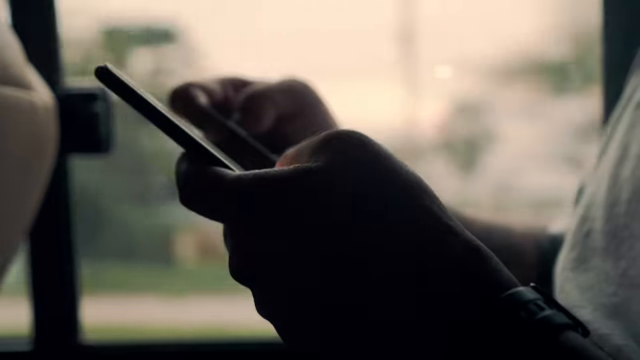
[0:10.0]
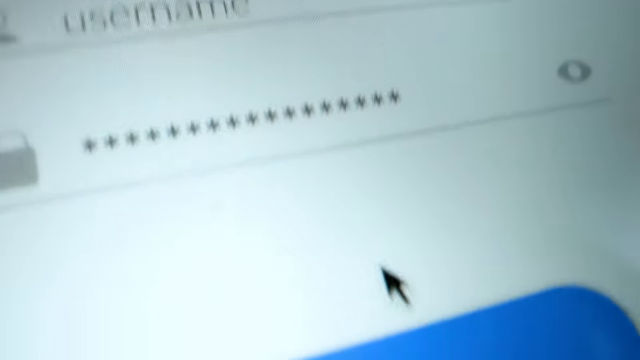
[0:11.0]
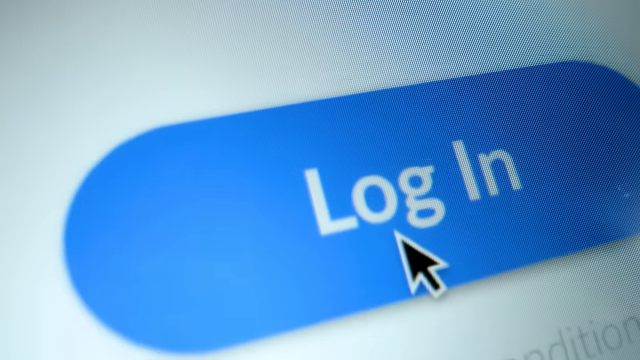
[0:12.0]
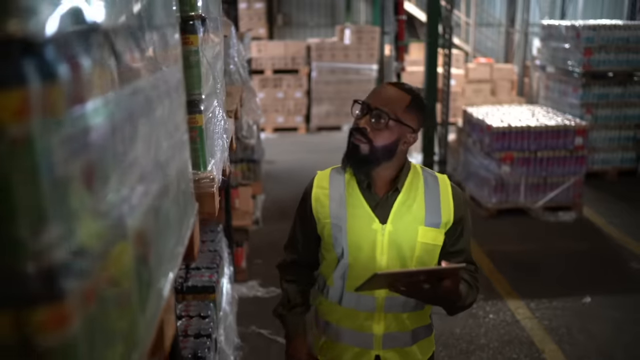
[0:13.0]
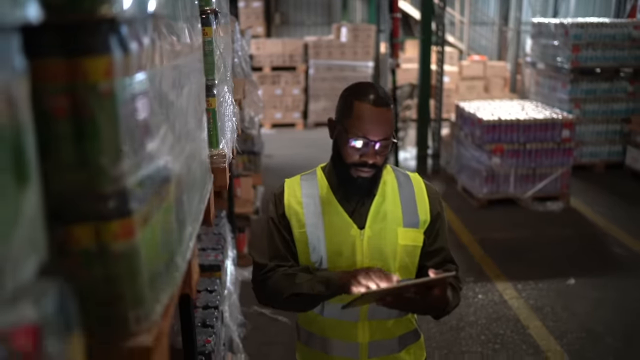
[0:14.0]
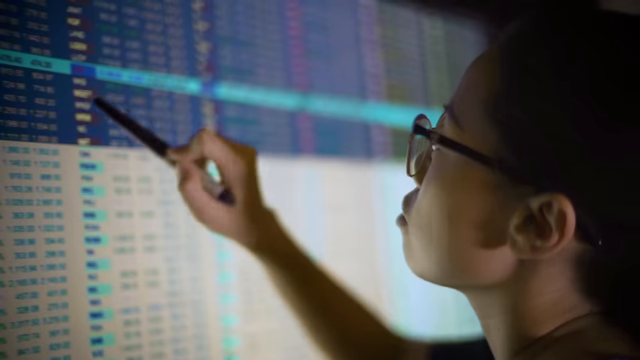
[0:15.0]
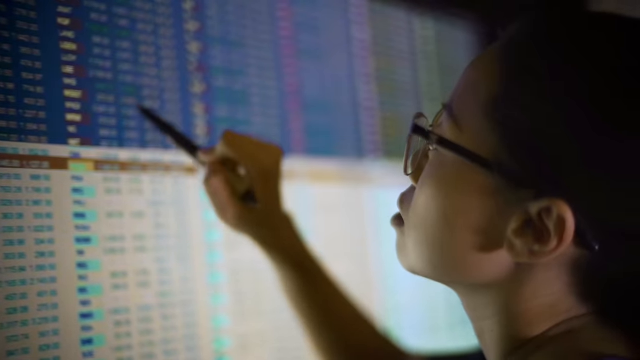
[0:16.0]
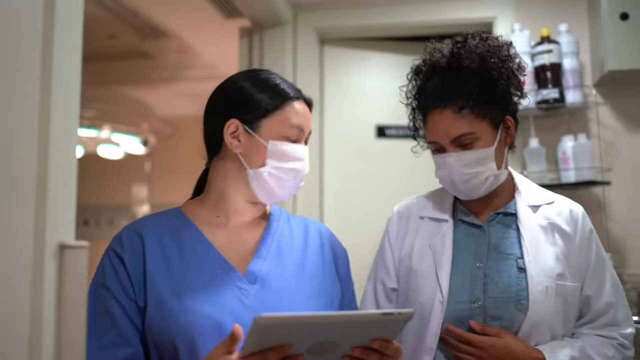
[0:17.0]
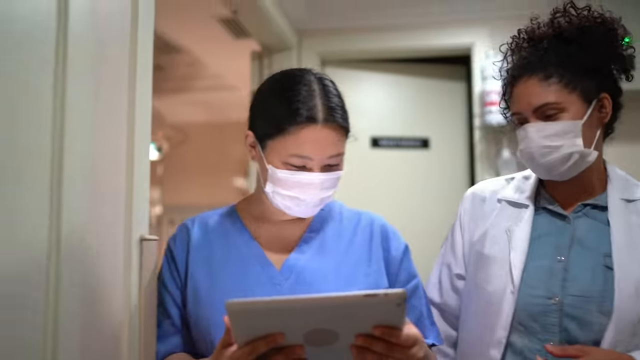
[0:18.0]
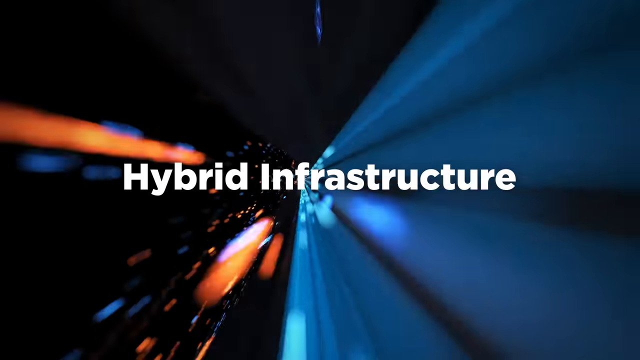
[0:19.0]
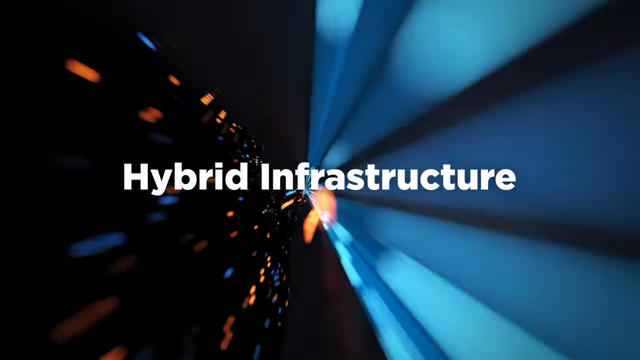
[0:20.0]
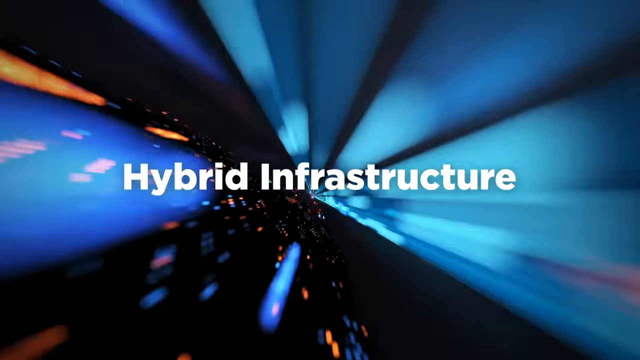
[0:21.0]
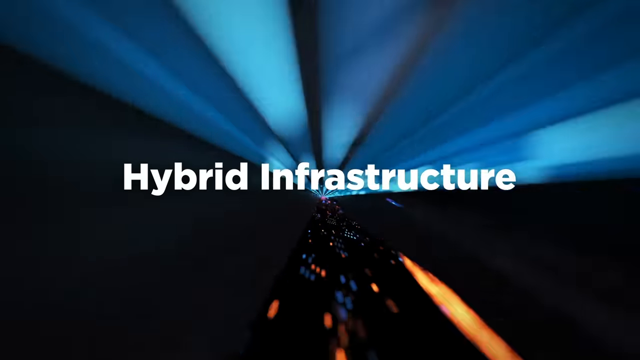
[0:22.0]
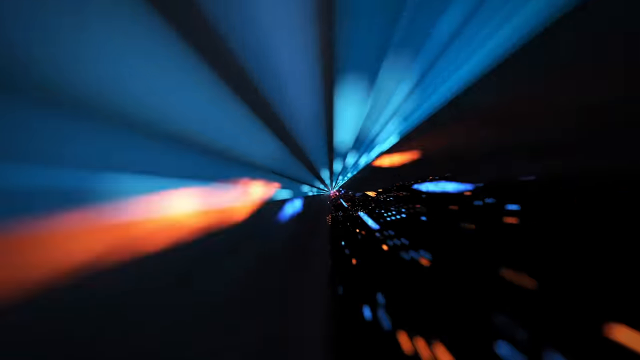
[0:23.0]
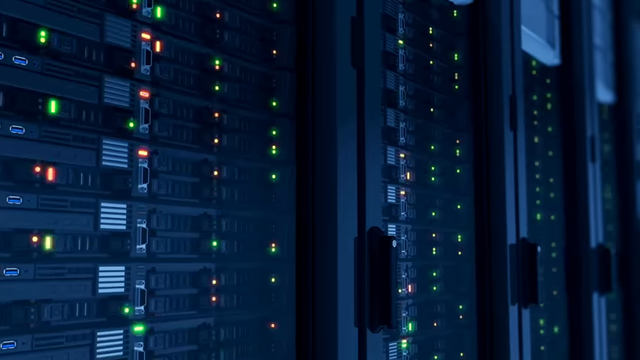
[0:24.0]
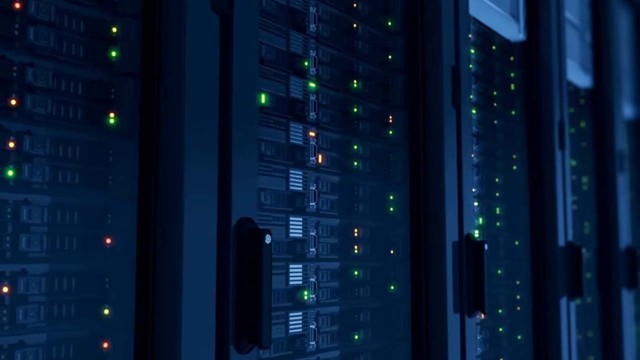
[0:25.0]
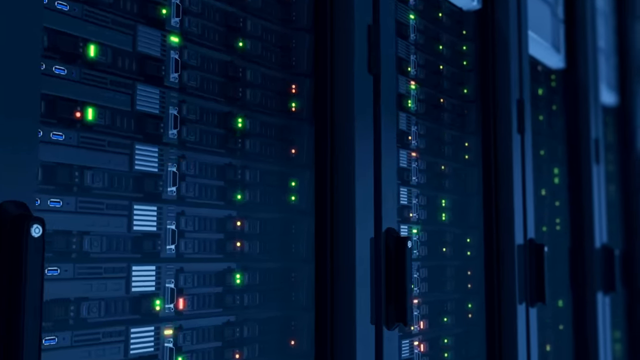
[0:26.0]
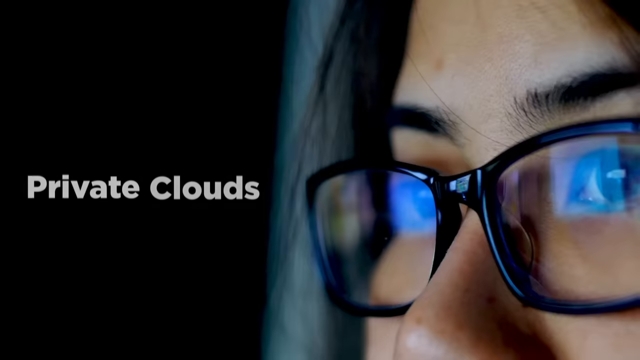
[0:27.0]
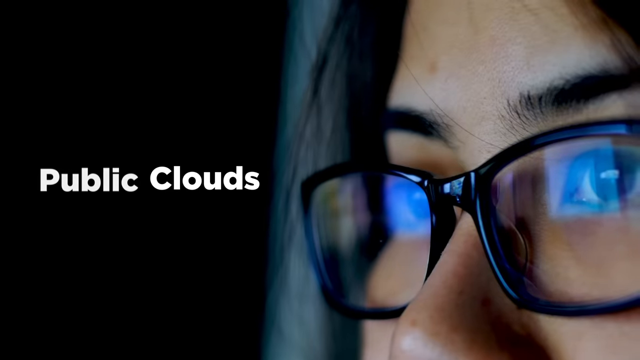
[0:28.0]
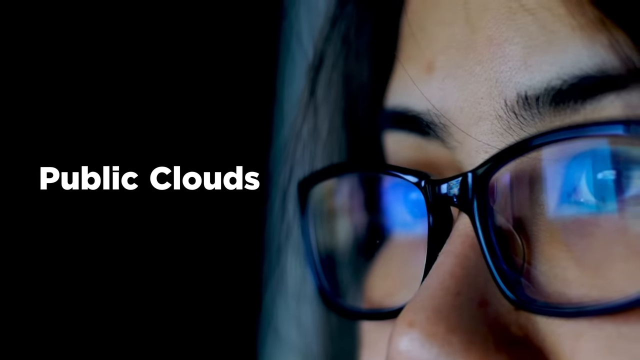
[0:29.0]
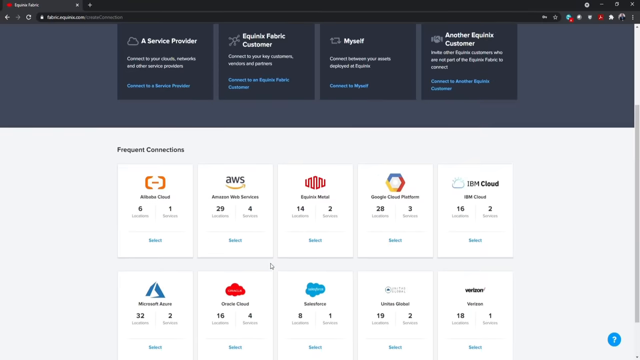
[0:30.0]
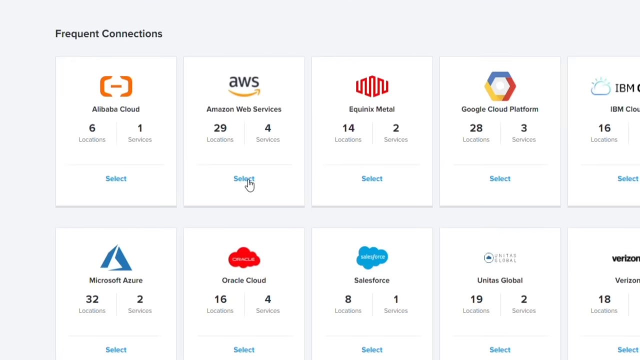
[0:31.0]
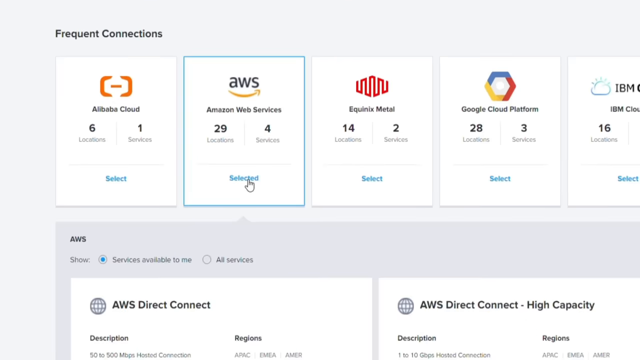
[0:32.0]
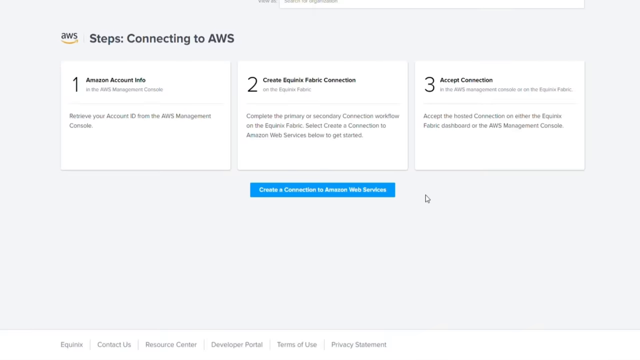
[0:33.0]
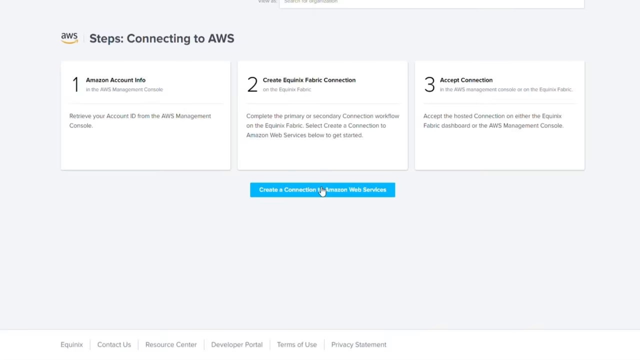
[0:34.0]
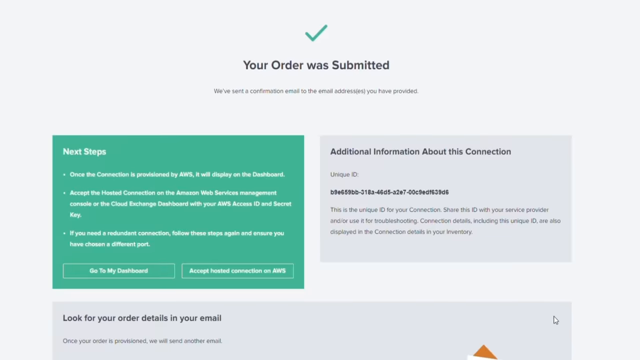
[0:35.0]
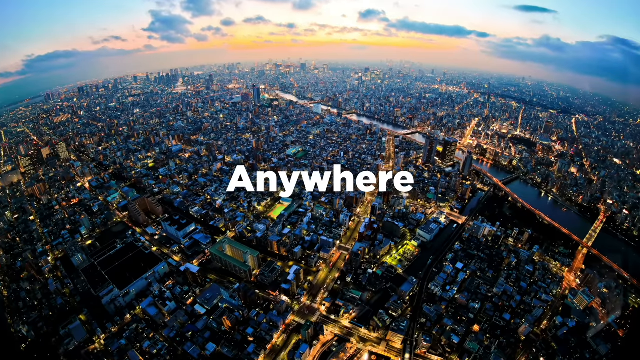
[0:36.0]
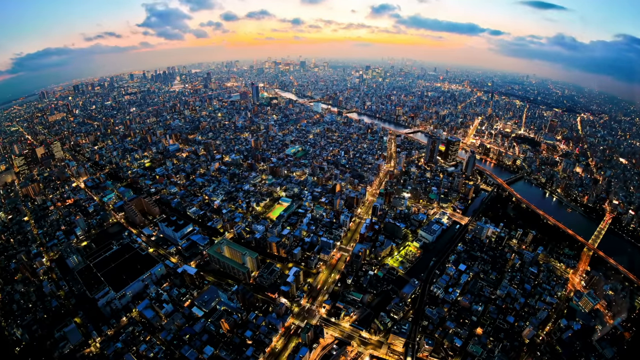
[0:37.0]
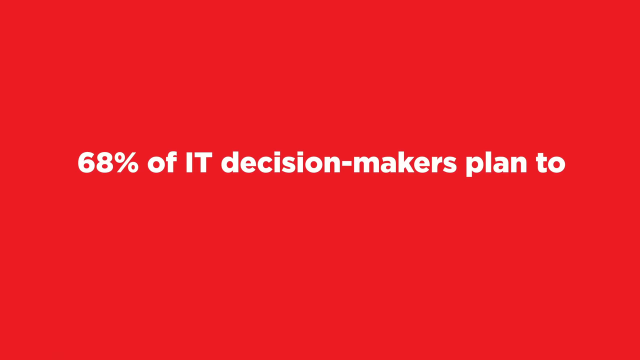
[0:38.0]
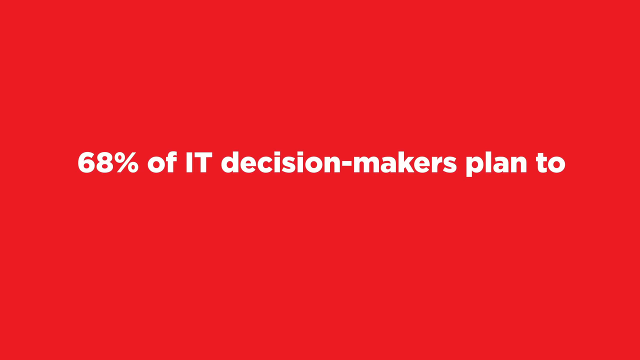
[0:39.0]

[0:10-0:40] A smartphone or similar device shows a login. In what looks almost like a commercial, a man is in a warehouse and someone points at a screen. Hybrid infrastructure comes up, followed by nurses and cyberspace-like computer graphics, machines, and private cloud imagery, possibly a computer program. Steps in what may be an "ALS" warehouse appear, along with computer screens, someone holding a pen, the nurses, and hybrid infrastructure. A cyberspace graphic shows computers and green lights, with private clouds and public clouds. Several programs, possibly apps, are shown: cloud, Oracle cloud, Equinix, Metal, AWS, IBM and Verizon. A statistic states that 68% of IT decision makers plan to move more function into cloud. The commercial is an advertisement for cloud services and logging into the cloud, showing people from nurses to computer workers to warehouse staff using it.